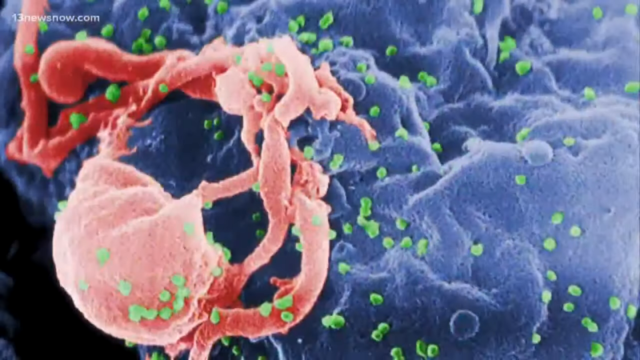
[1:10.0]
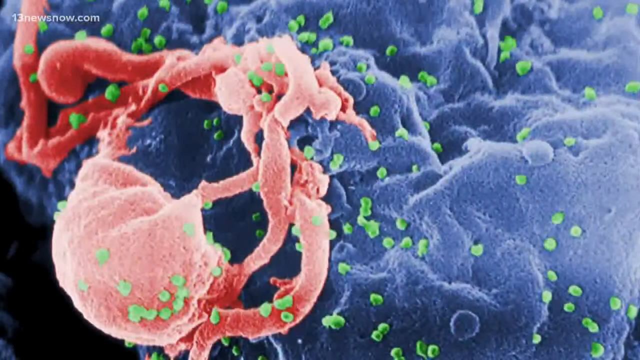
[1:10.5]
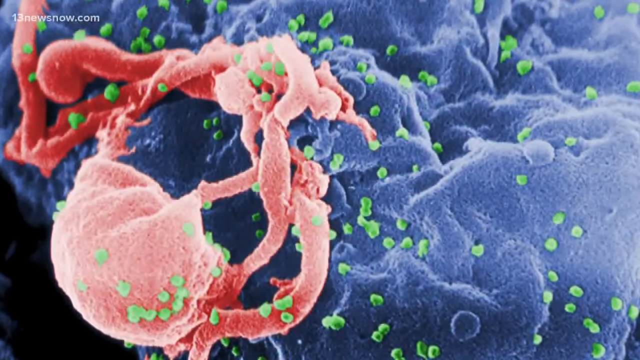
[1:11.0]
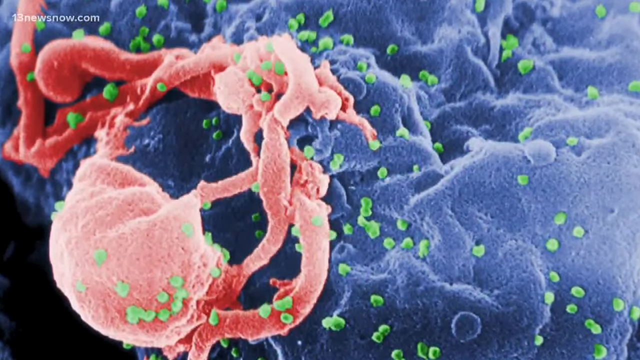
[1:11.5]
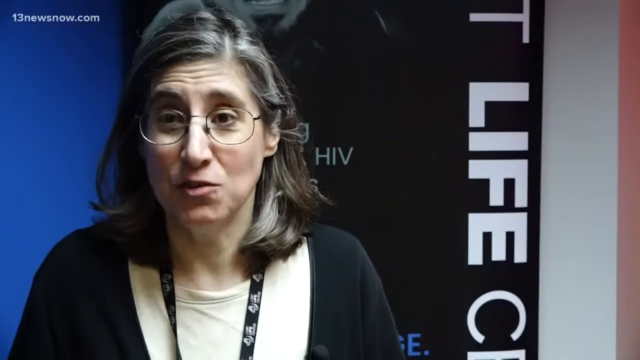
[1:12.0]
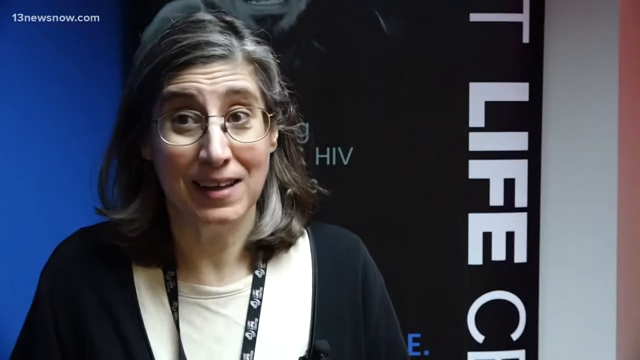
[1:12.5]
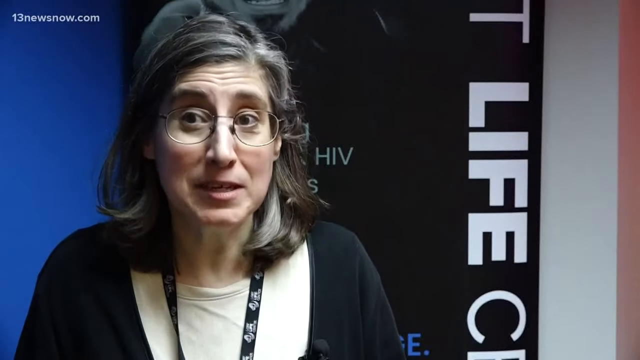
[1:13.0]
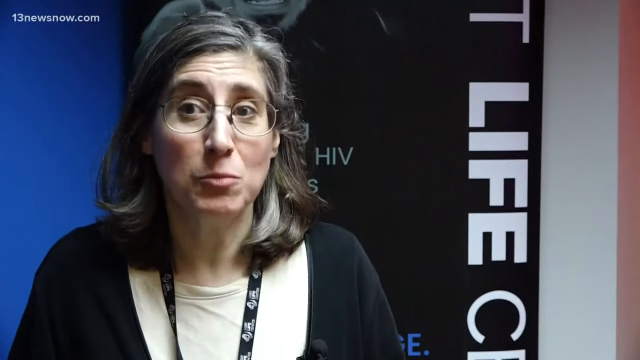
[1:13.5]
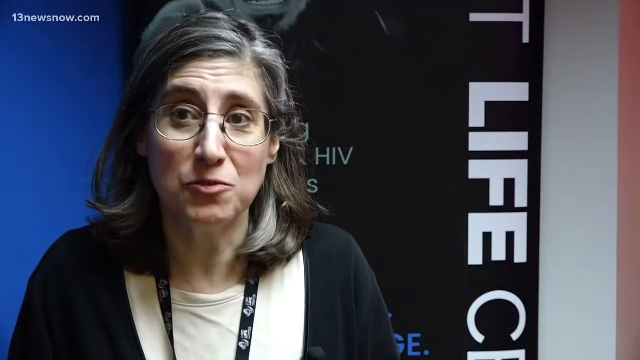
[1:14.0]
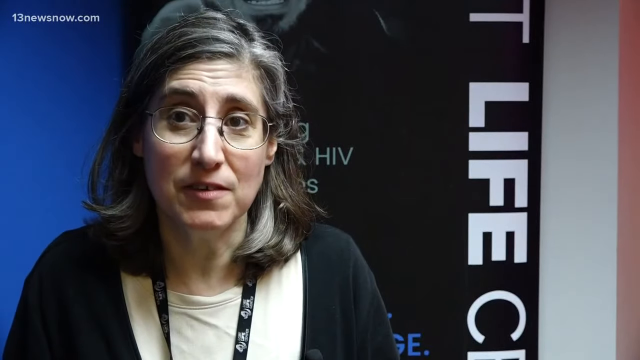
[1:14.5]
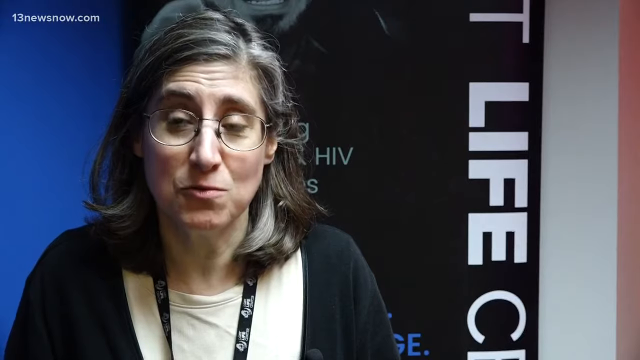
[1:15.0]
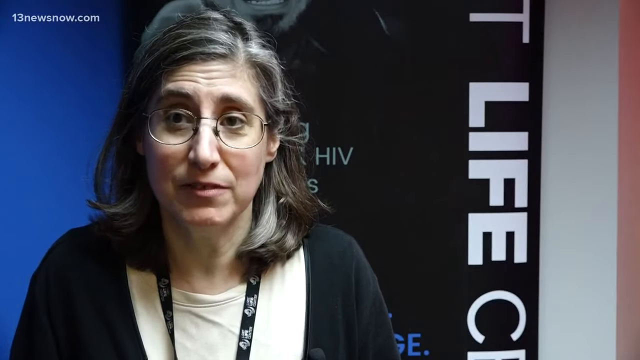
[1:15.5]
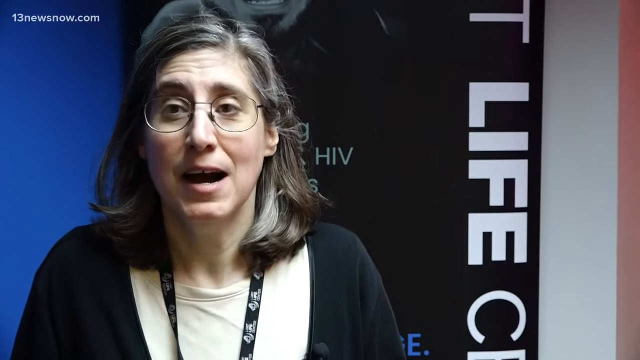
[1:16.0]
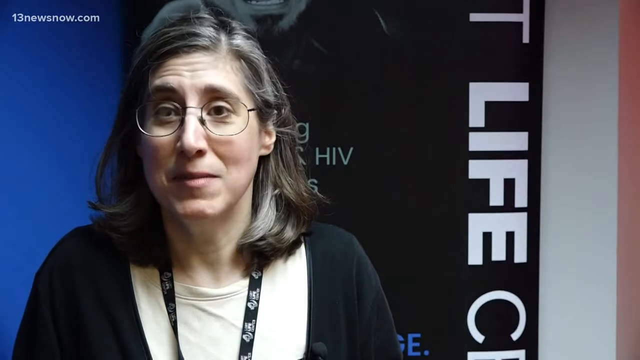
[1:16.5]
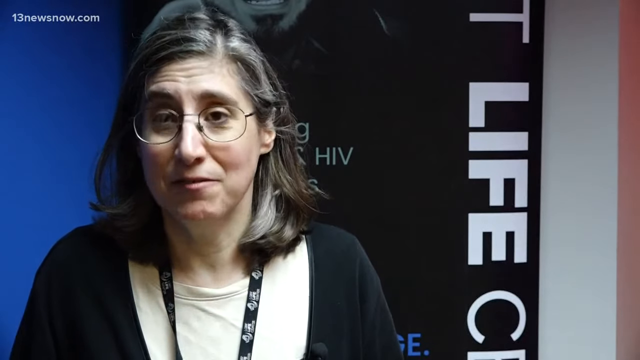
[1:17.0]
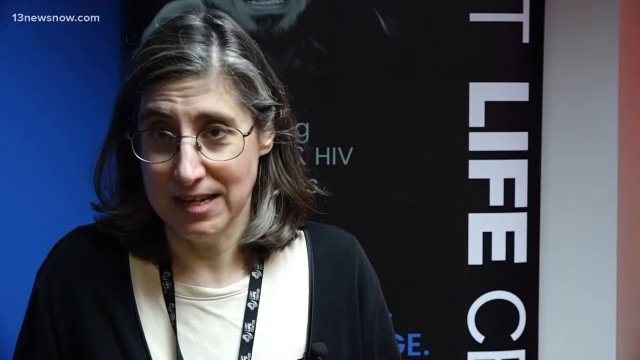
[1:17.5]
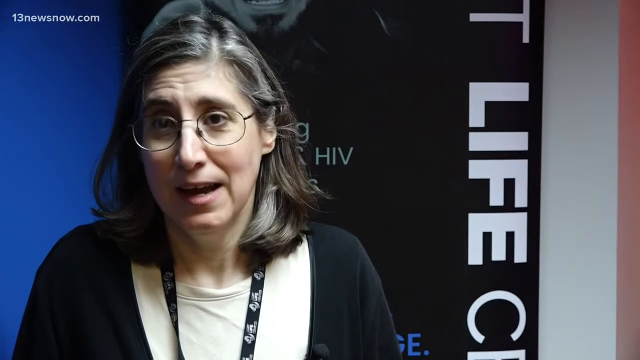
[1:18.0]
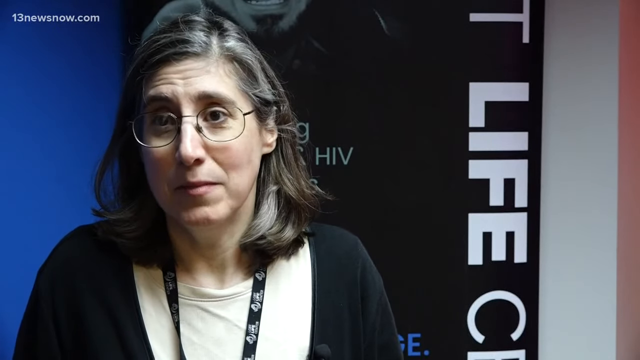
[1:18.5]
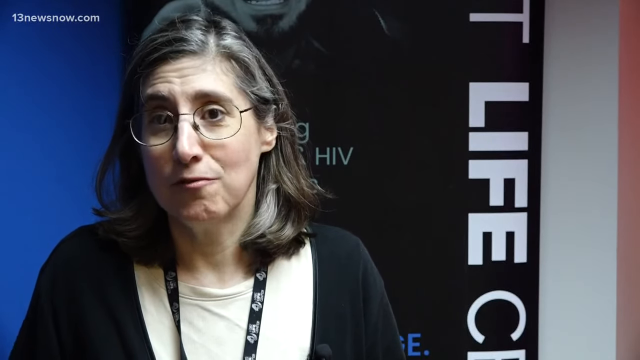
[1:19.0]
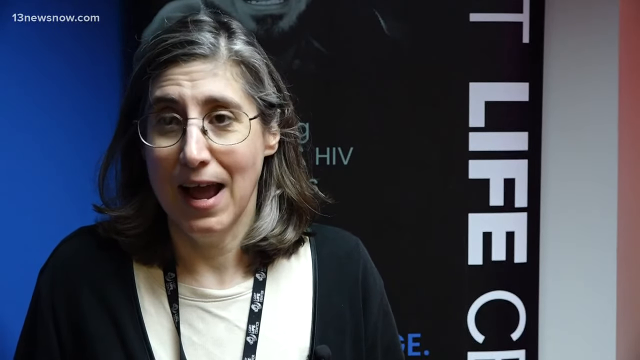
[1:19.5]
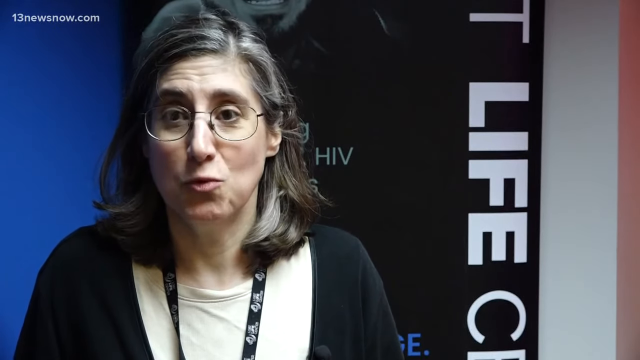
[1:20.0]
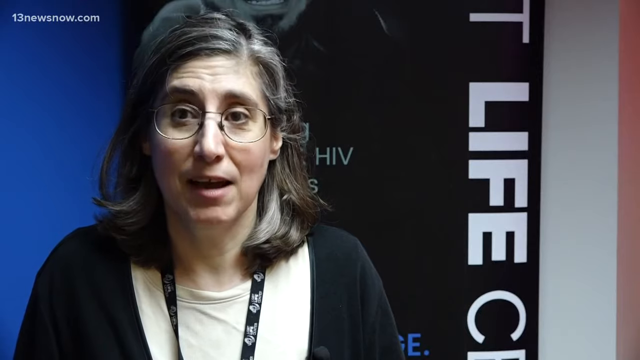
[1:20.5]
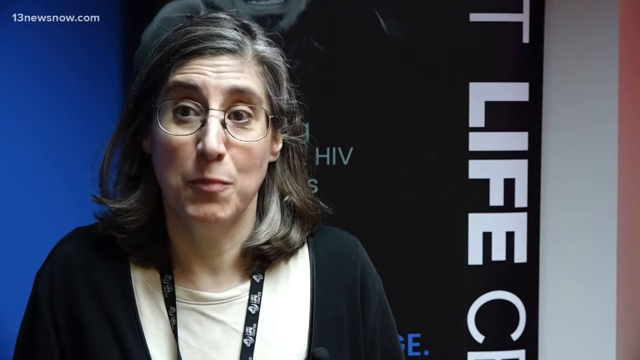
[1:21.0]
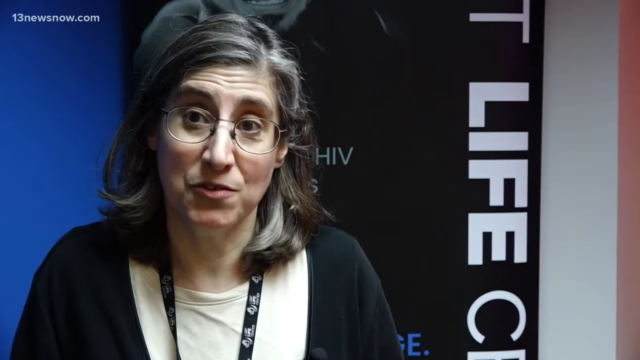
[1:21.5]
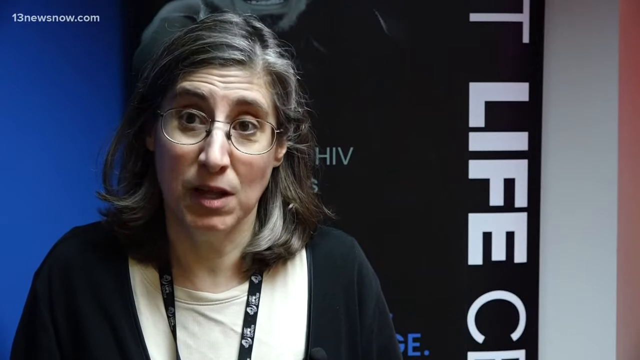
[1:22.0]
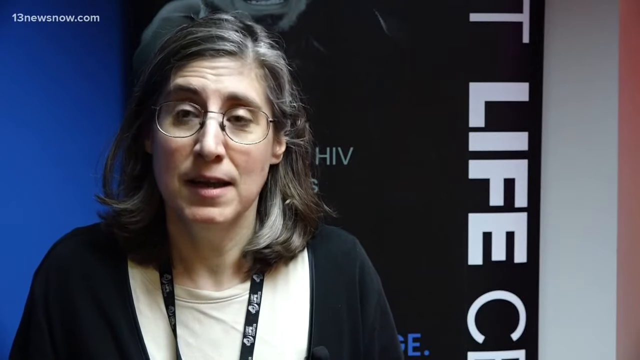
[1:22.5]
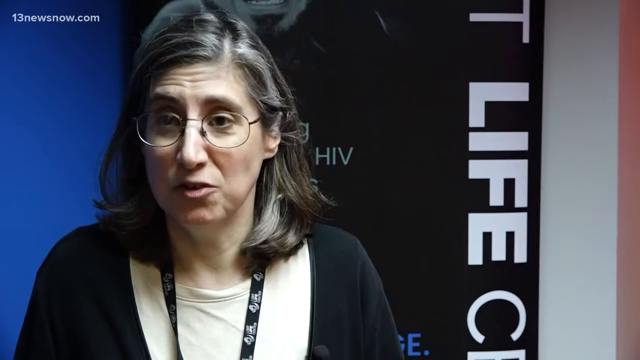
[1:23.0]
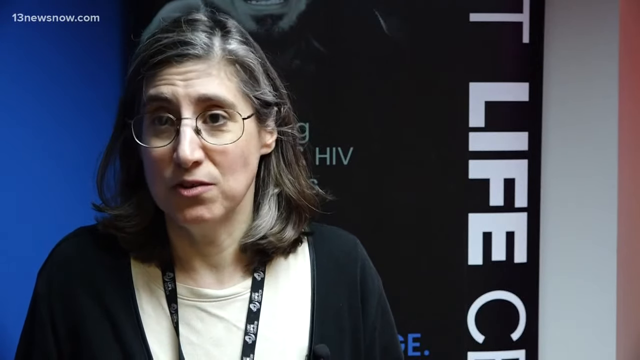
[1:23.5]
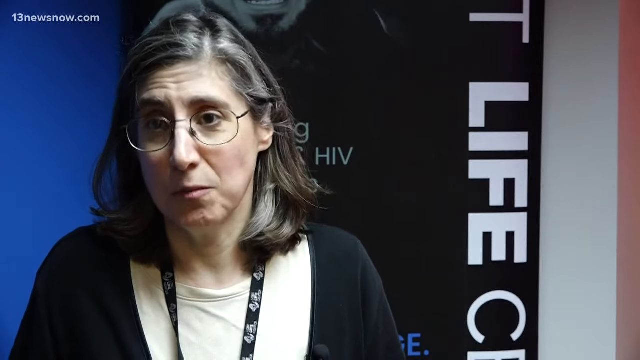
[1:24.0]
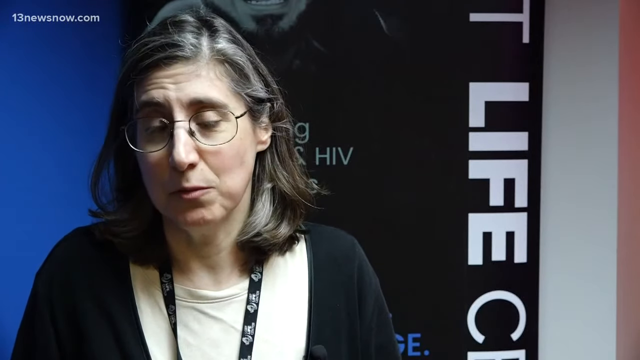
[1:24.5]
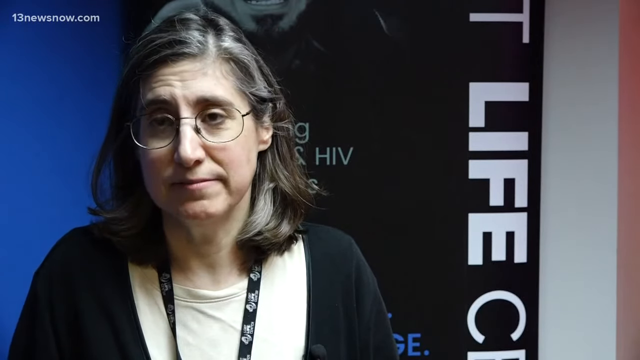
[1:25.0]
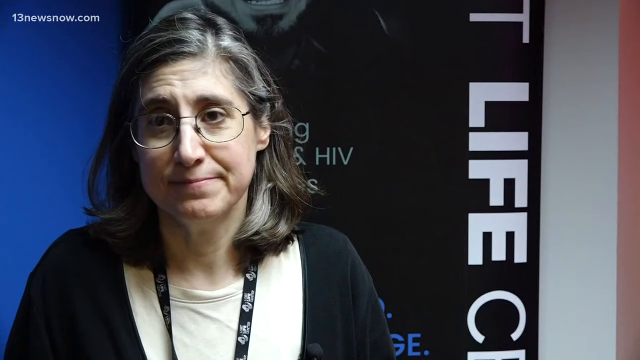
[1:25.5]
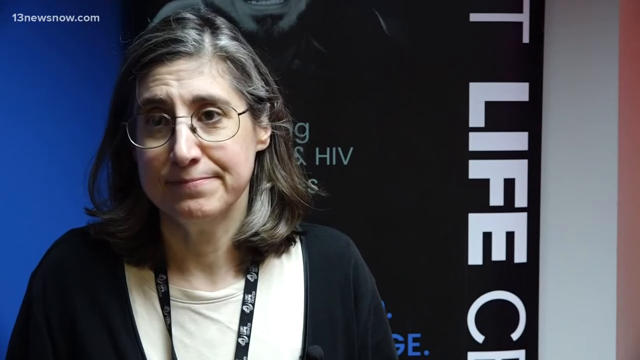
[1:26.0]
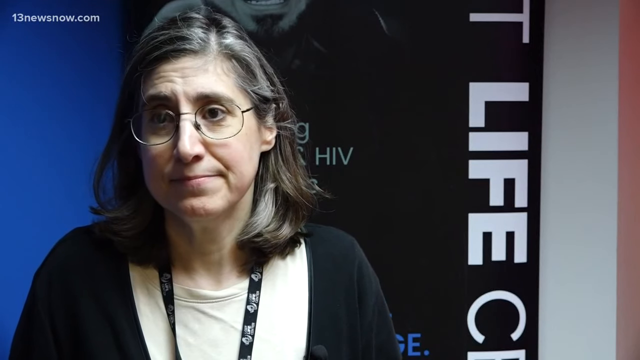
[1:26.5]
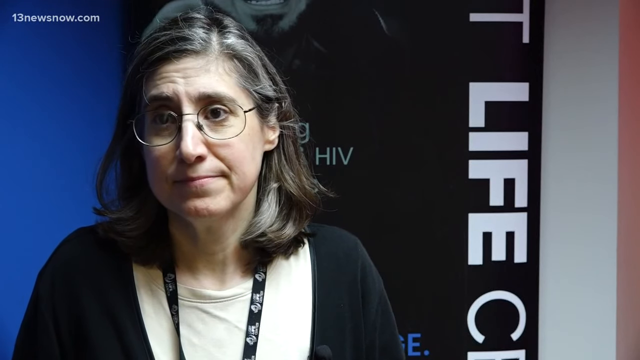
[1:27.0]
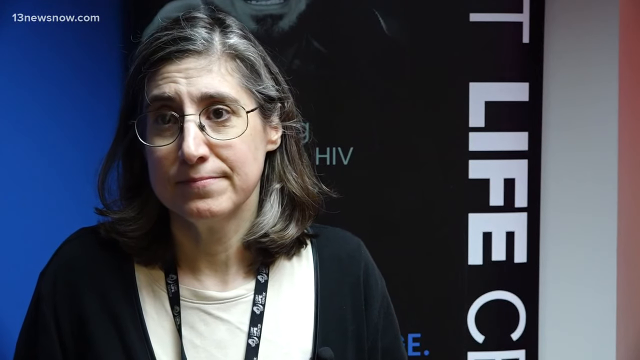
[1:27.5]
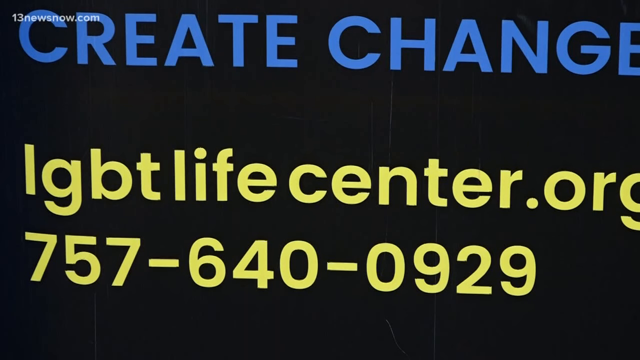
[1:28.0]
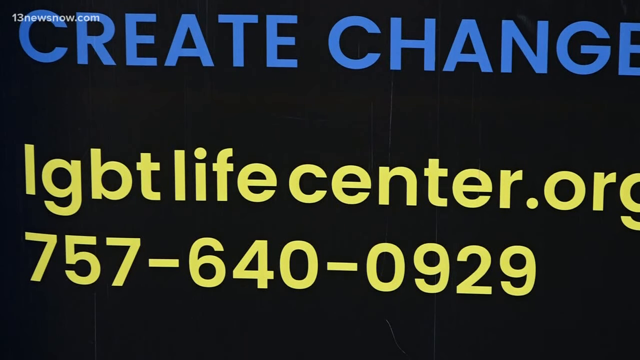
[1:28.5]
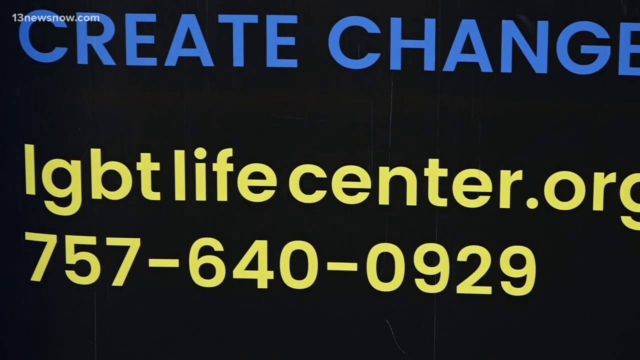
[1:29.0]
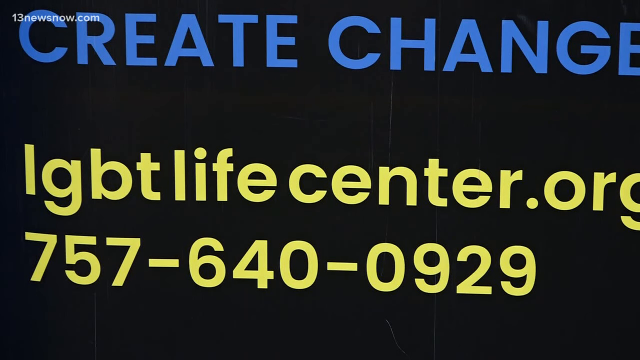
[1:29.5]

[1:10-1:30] An orange blob, a cell with sort of little tubes and little green dots all around it, is set against a blue mass with lots of grooves and dips in the background. No captions appear over the image of the cell. The video then cuts back to the older white woman with short hair, talking again, with the word "life" on a banner behind her; she appears to be talking in an educational, informative way. Next, a screen reads "create change" in blue letters, and below that, in yellow, "lgbtlifecenter.org 757 640 0929", a phone number.